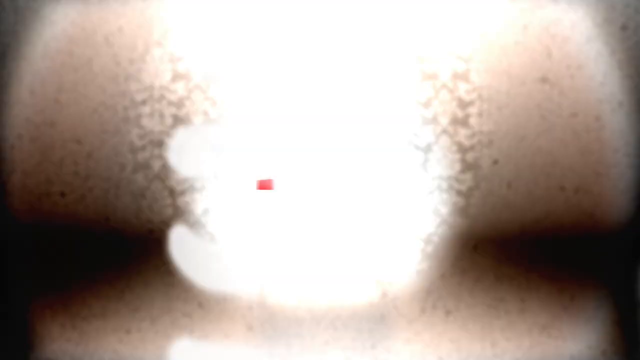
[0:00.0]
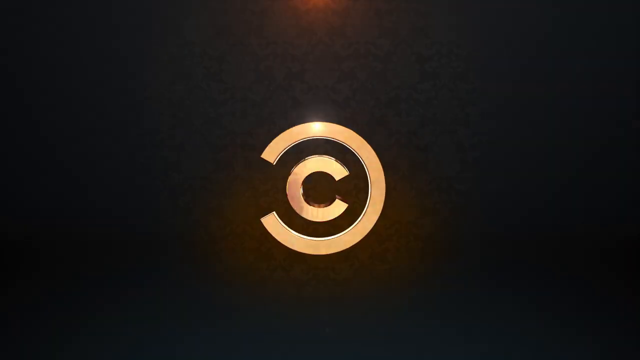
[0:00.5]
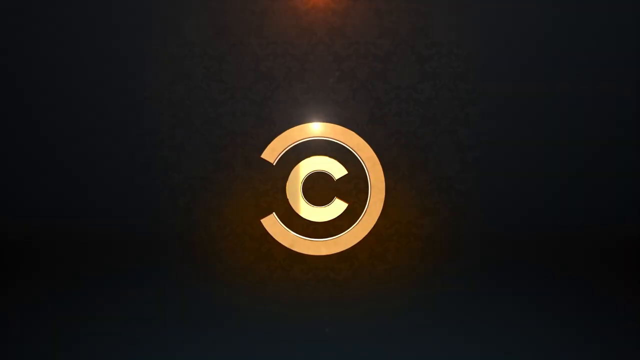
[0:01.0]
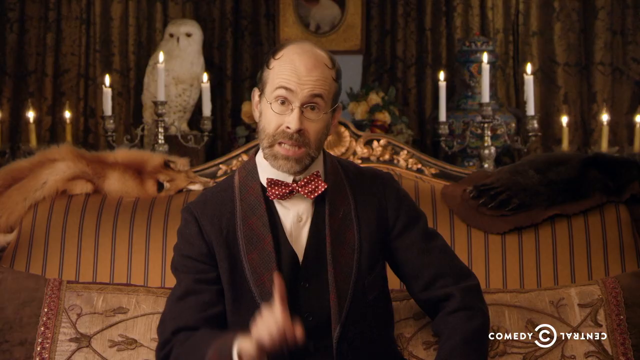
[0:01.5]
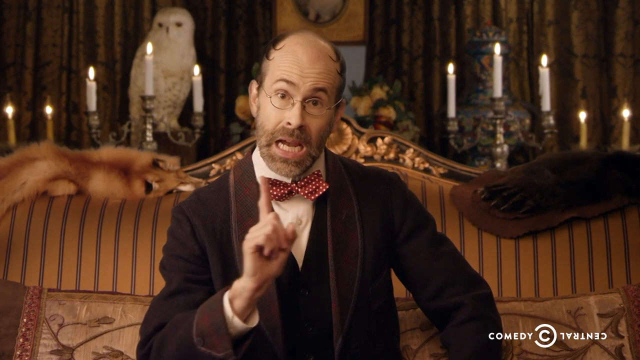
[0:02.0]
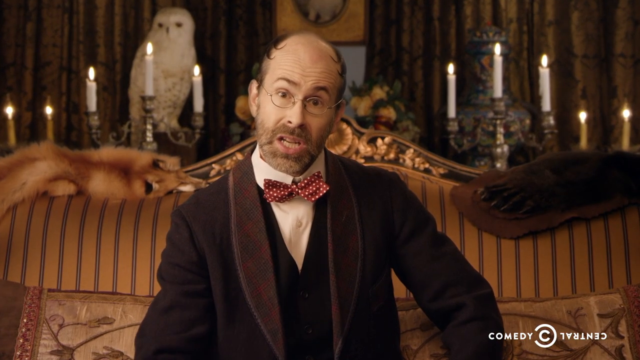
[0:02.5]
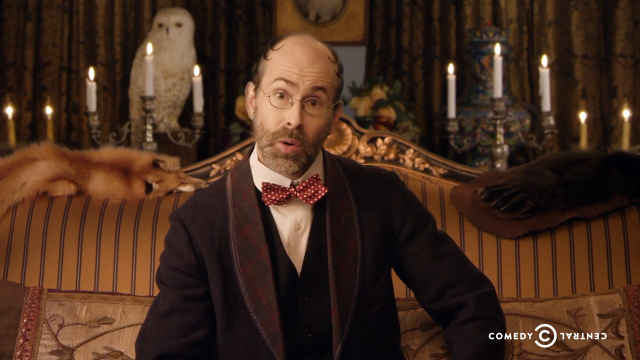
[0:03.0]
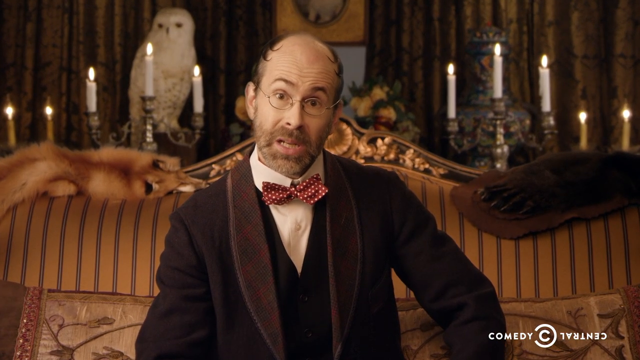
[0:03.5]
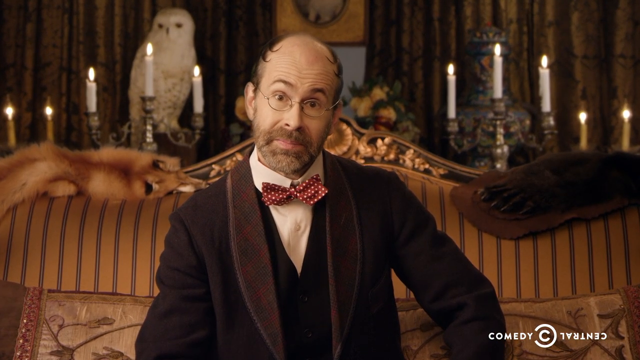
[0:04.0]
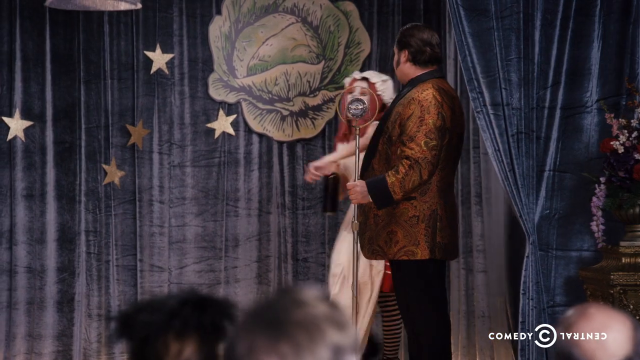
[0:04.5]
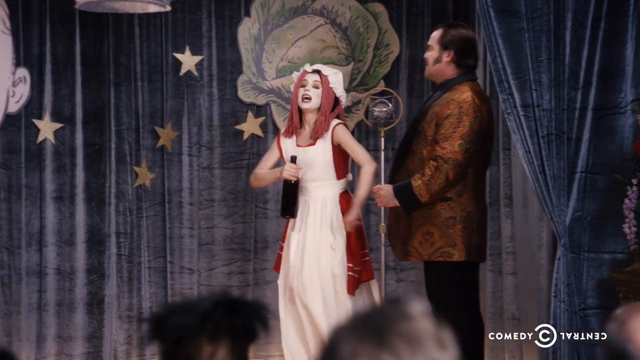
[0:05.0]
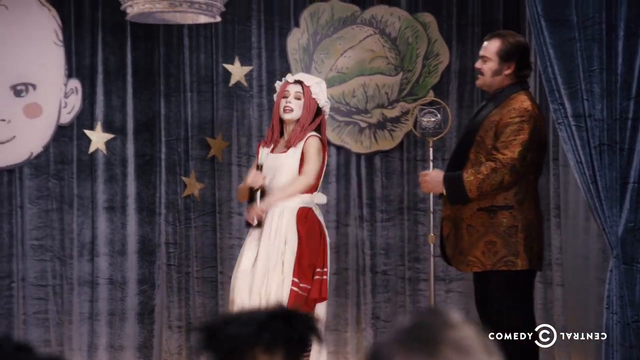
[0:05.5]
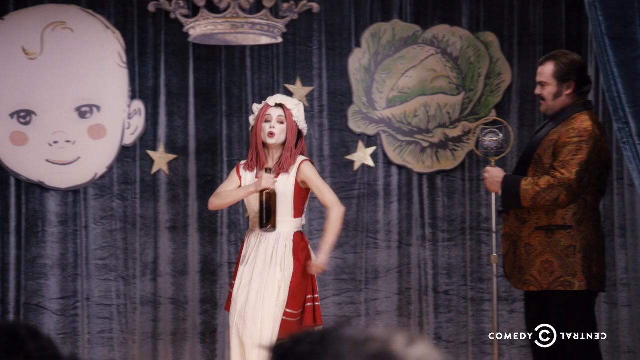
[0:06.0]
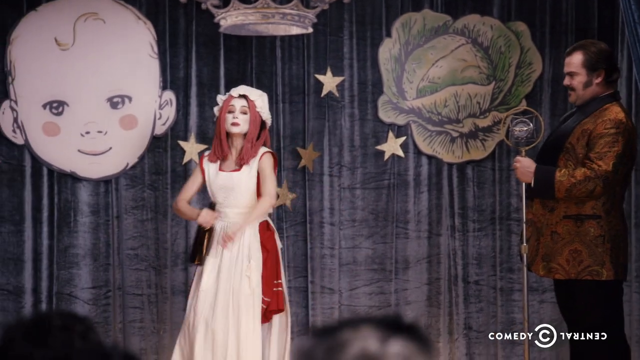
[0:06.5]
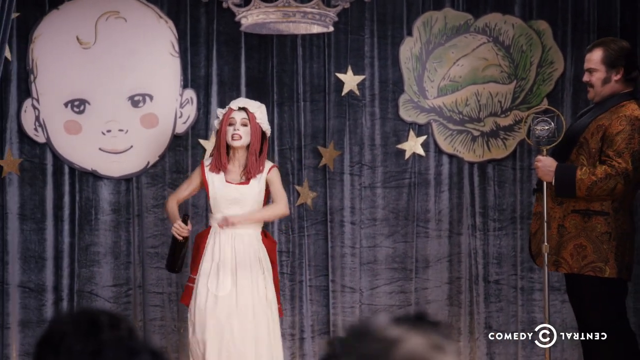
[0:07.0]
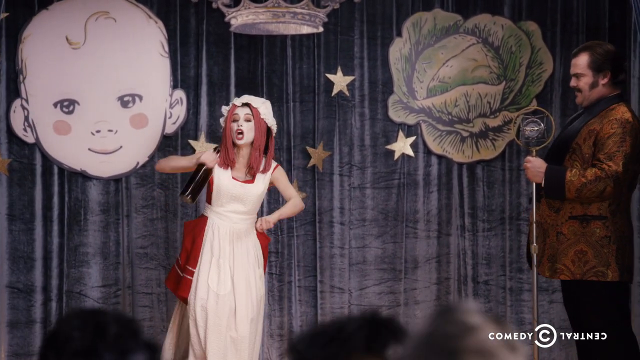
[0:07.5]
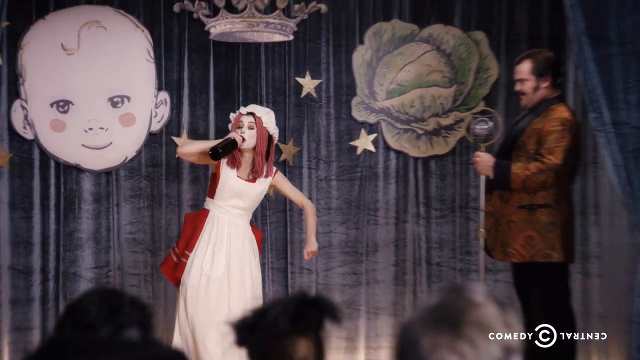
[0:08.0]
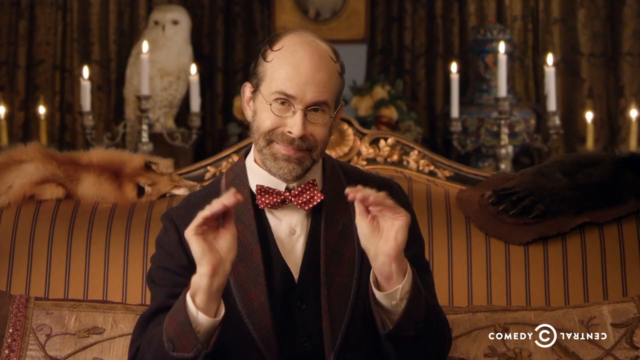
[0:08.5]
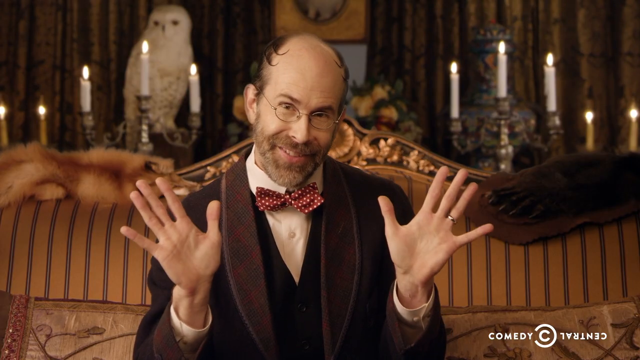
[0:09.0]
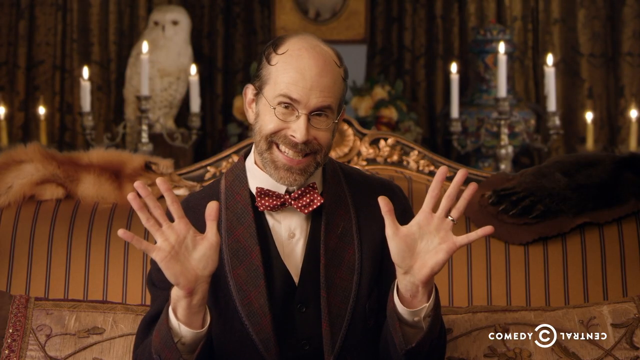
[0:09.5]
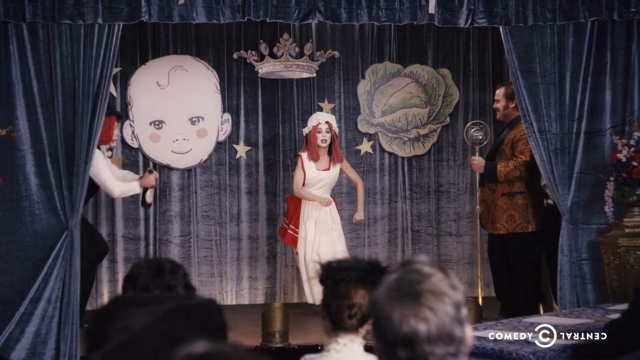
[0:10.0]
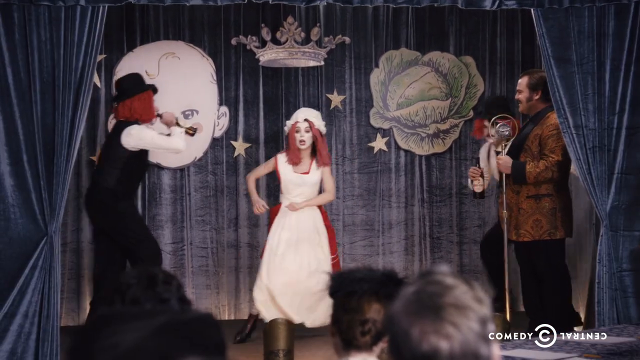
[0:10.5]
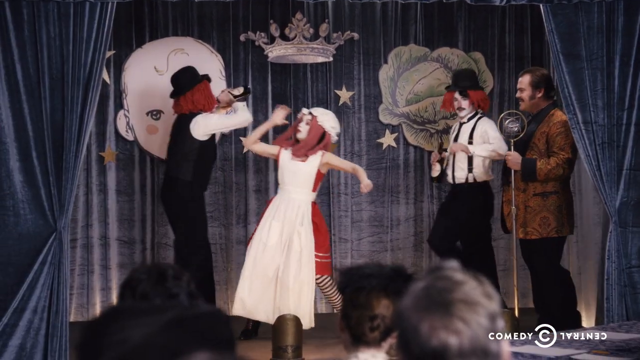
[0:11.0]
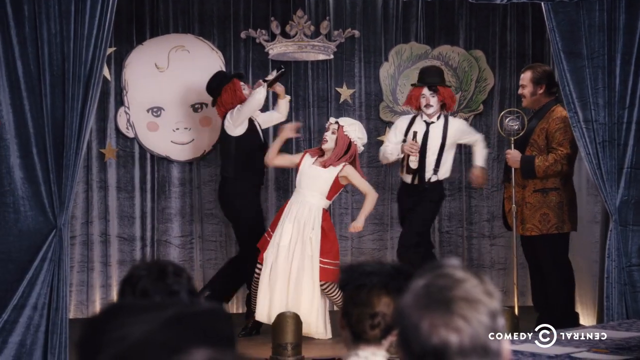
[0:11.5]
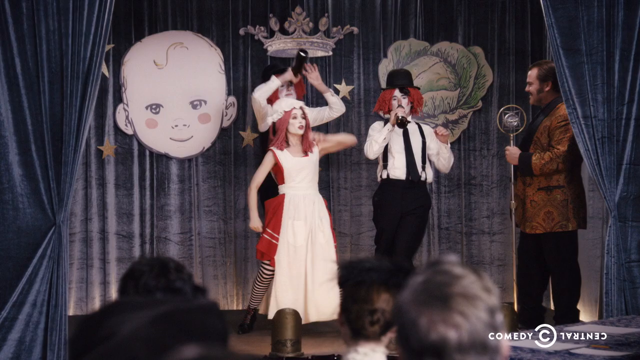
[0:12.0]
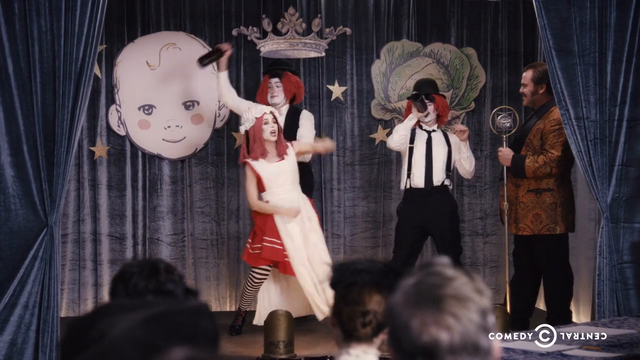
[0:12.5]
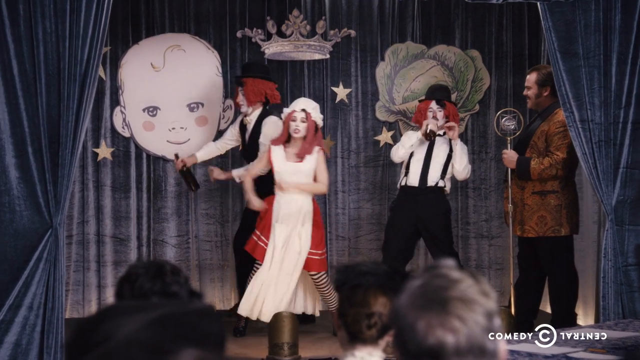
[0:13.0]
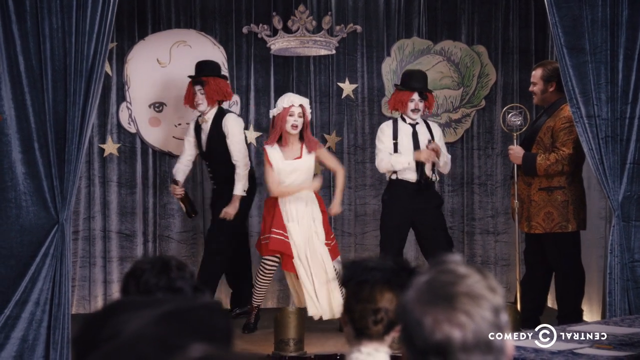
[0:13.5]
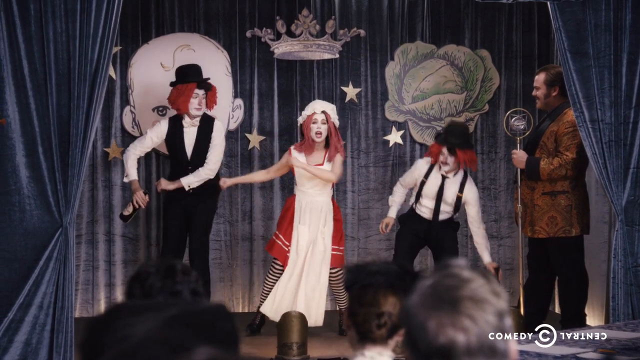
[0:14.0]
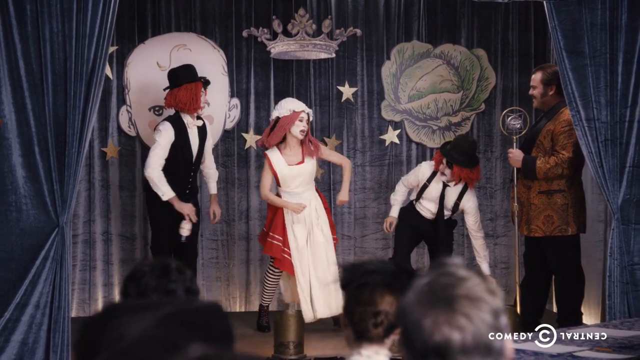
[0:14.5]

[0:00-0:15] What appears to be a Comedy Central show, seemingly a sketch comedy program, shows what look like a few different comedians performing on stage together. There appear to be three men and one woman, performing what looks like a skit set in a different time; judging from the clothes, it could possibly be the turn of the 19th century. They are all performing stand-up on a stage, and it appears to be a Comedy Central program.